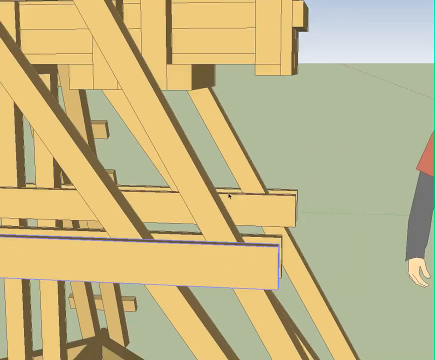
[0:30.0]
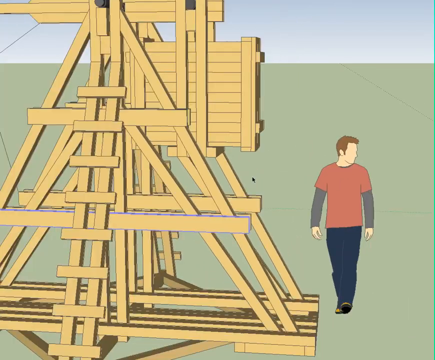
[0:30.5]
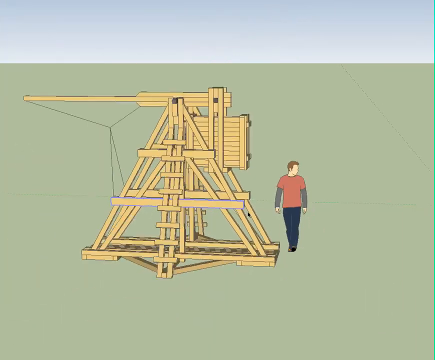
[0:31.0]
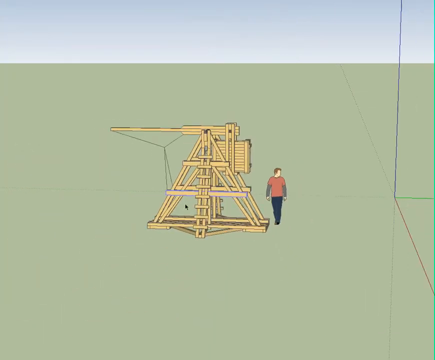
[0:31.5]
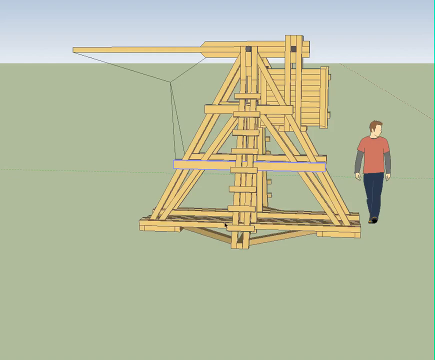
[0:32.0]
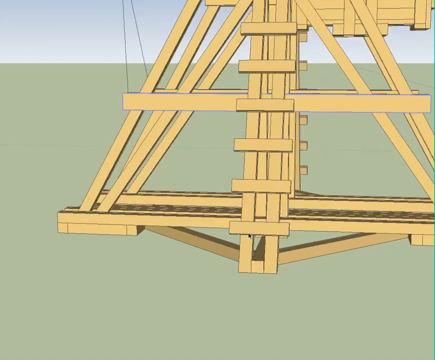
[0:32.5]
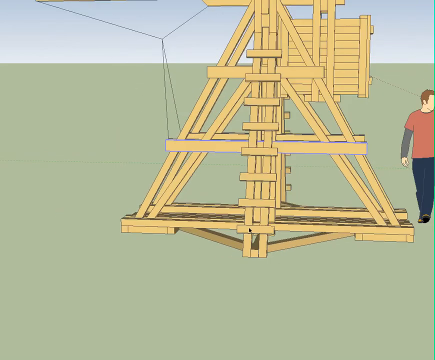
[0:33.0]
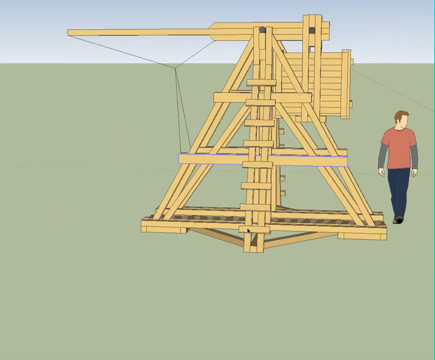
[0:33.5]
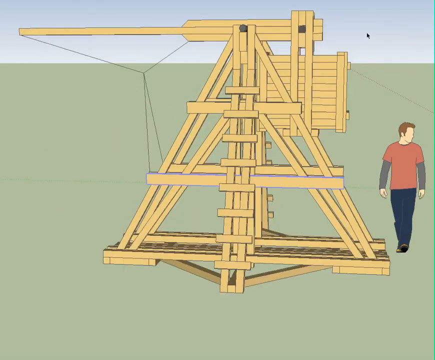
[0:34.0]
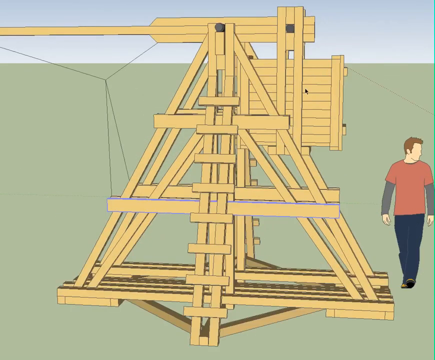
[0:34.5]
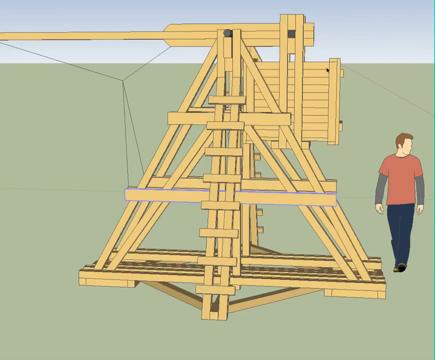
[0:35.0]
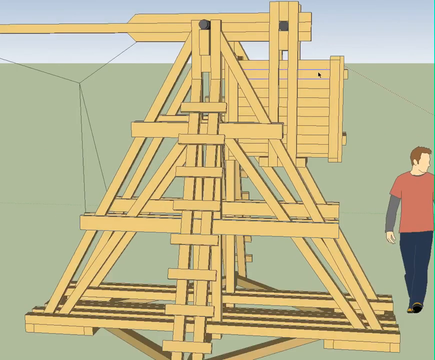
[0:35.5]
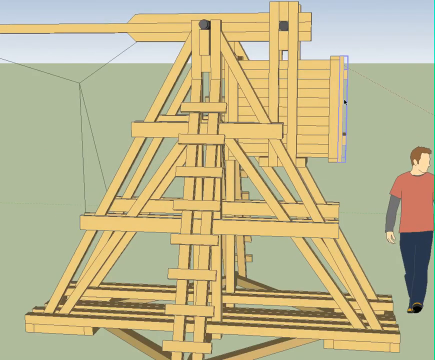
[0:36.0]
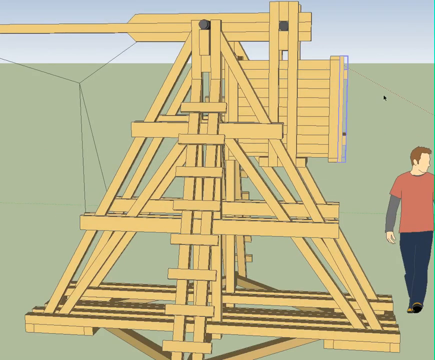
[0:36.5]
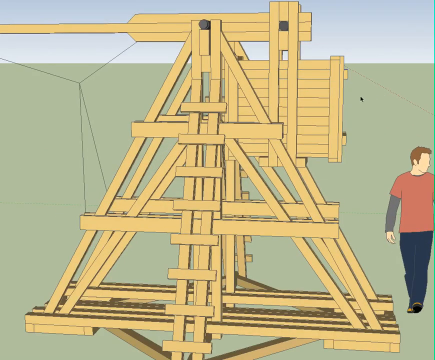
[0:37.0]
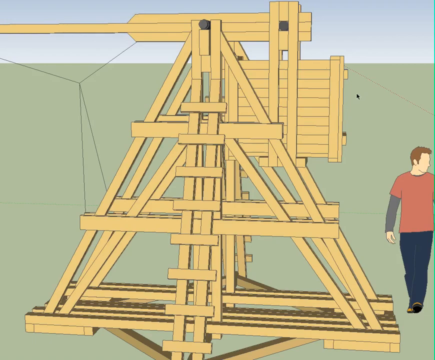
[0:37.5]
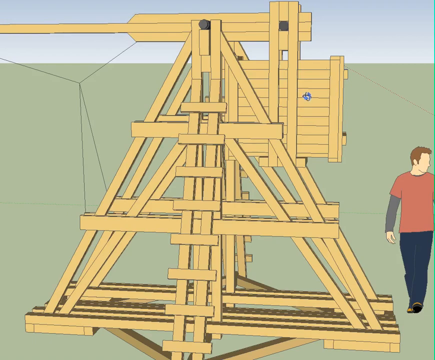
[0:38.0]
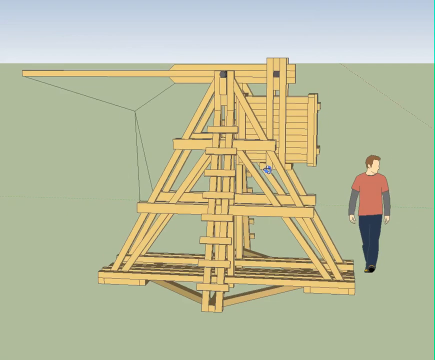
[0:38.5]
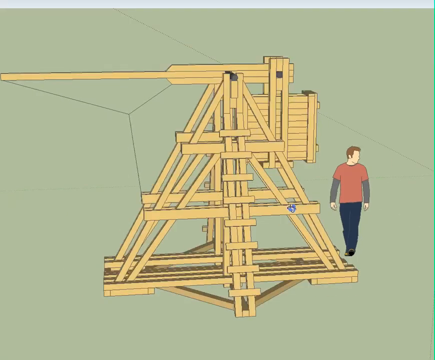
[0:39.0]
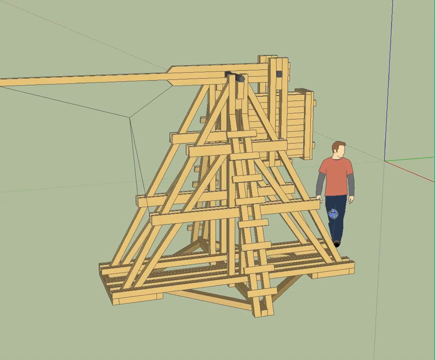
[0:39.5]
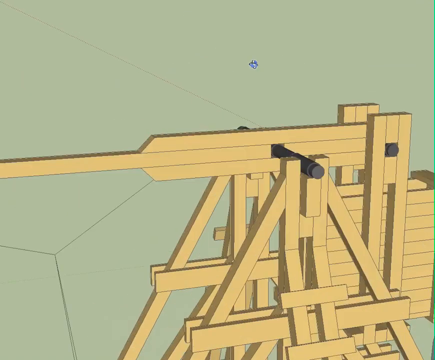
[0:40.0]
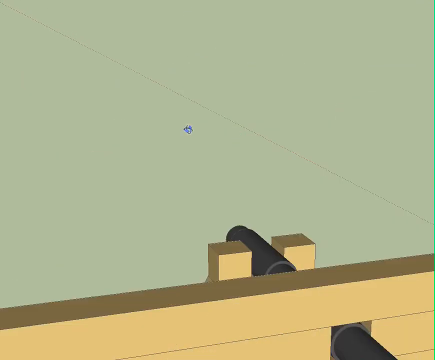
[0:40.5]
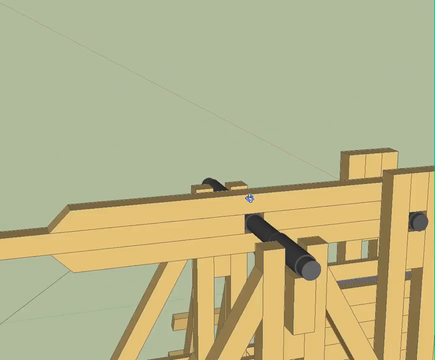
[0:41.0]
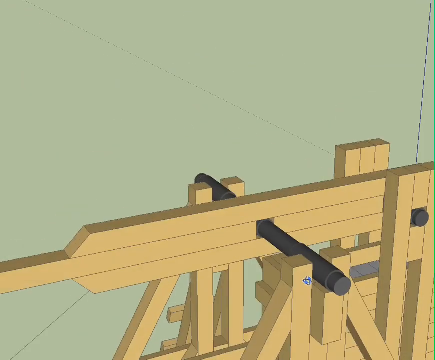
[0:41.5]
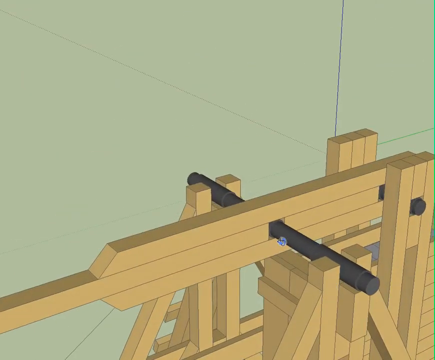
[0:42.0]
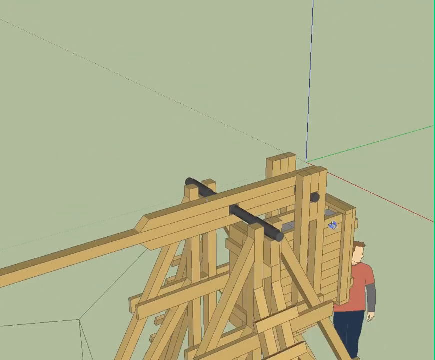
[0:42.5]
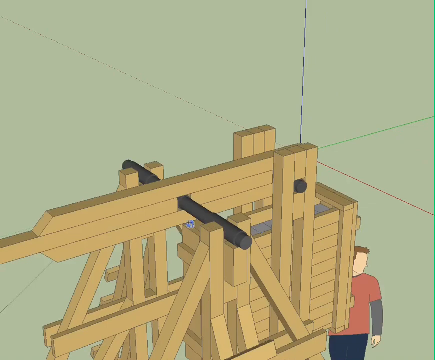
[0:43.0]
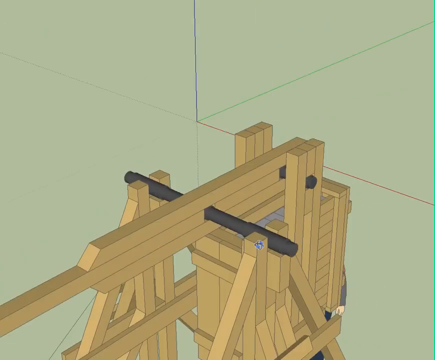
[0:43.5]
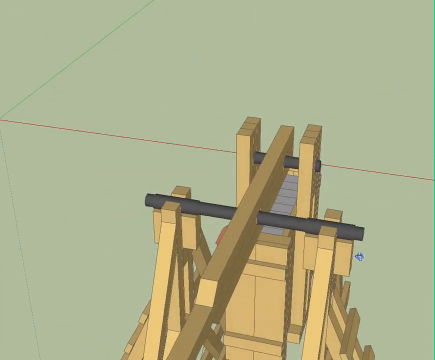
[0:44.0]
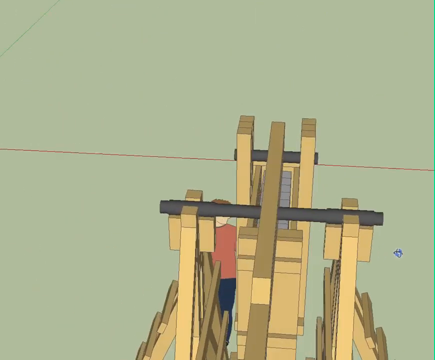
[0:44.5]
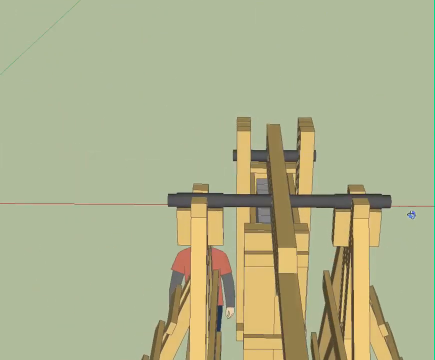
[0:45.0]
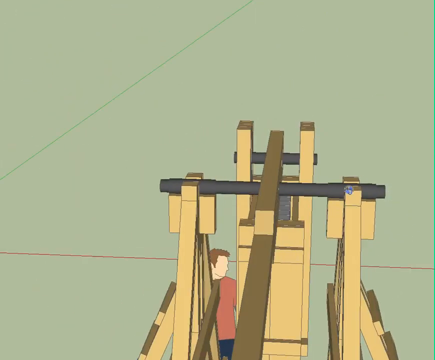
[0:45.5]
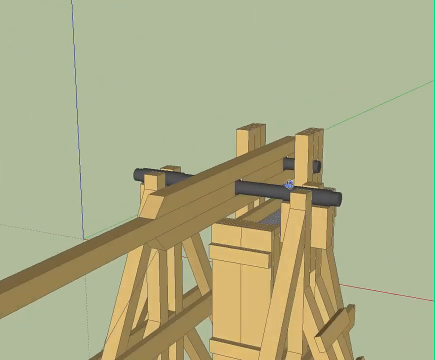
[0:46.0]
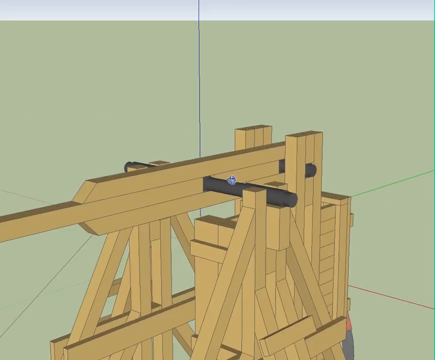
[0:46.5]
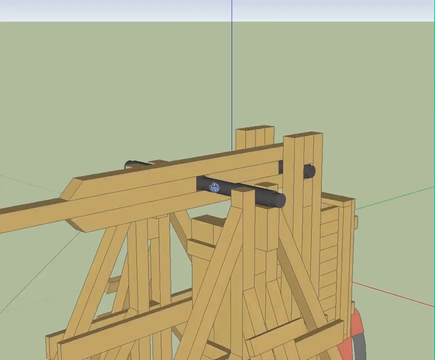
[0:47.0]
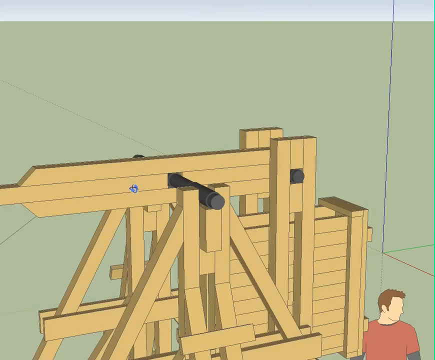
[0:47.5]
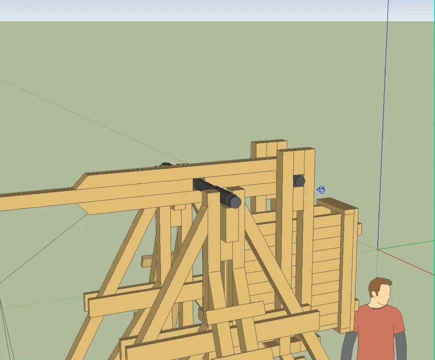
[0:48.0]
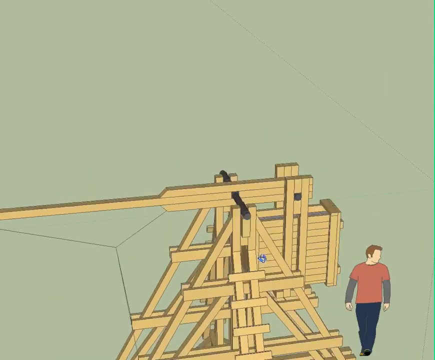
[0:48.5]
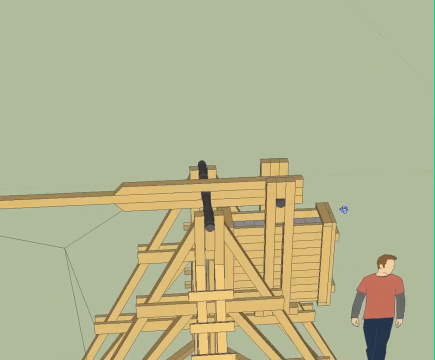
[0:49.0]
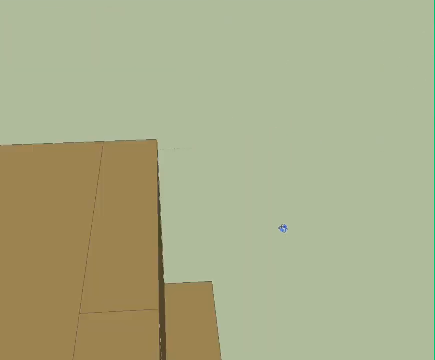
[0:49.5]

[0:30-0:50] Up close, an outline shows on the far left outside piece. The view goes back out, then comes close again with that piece outlined. There appears to be a tablet. The cursor moves all around, almost like putting together Lego or Lincoln Logs, and the structure keeps moving in circles as if being looked at from different angles. The structure appears to be two triangle pieces put together, with a bar in between holding them together. The image is computer generated, with a green background and a blue line, a red line and a green line. Two pieces of lumber on the outside look like a ladder and hold a metal piece inside, and the component is structured on both sides to hold it up, apparently in balance.